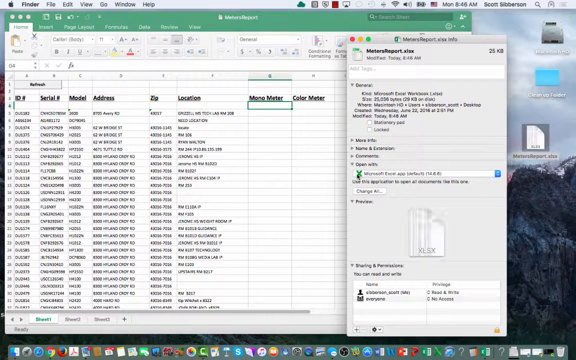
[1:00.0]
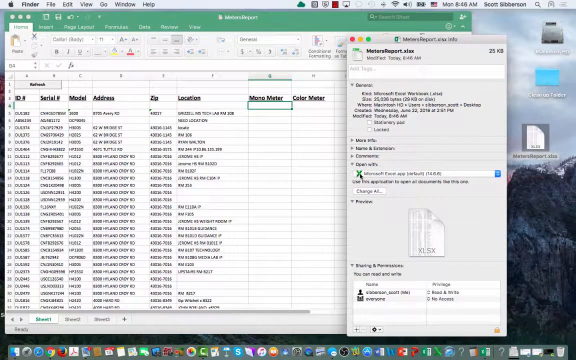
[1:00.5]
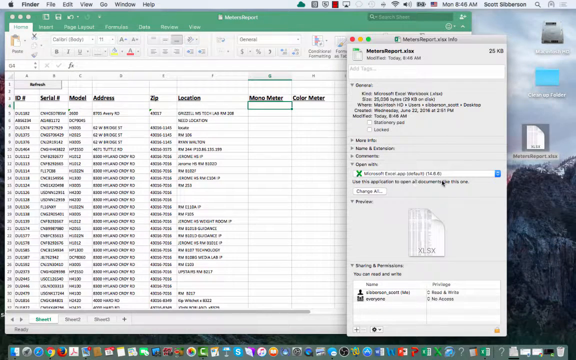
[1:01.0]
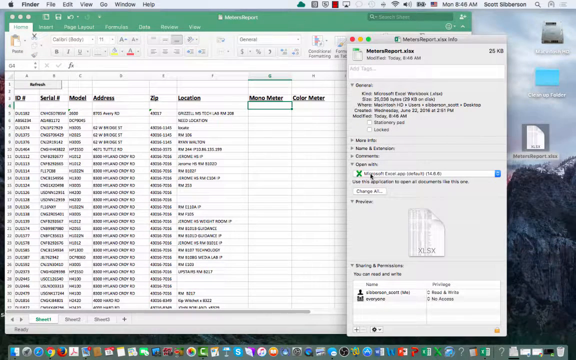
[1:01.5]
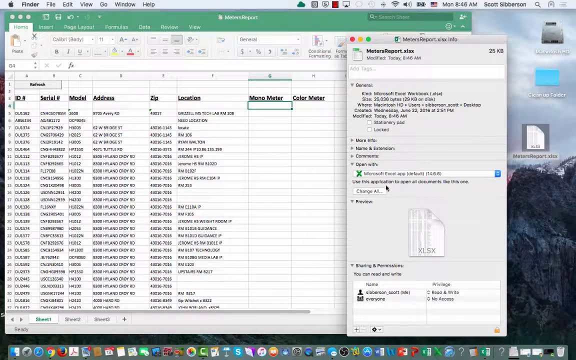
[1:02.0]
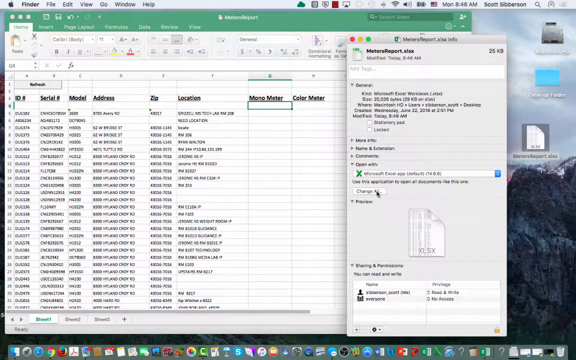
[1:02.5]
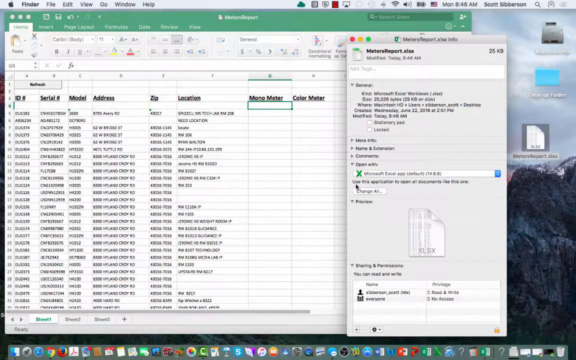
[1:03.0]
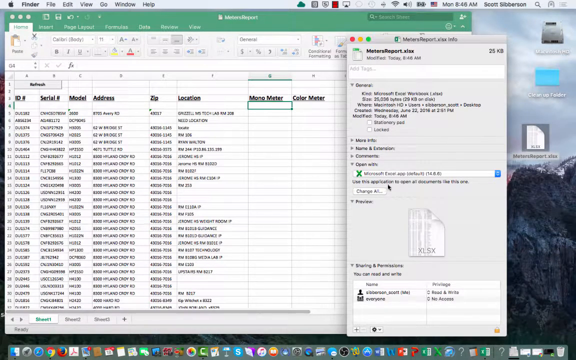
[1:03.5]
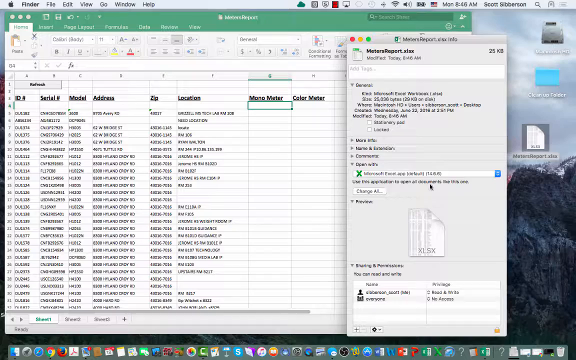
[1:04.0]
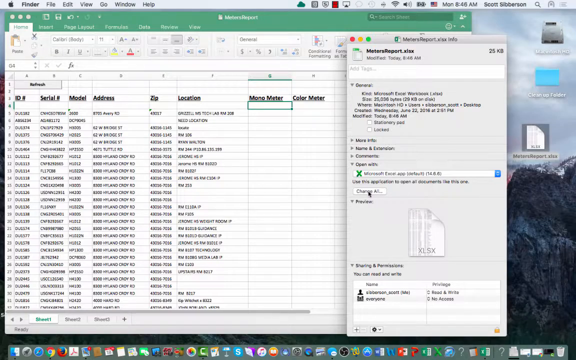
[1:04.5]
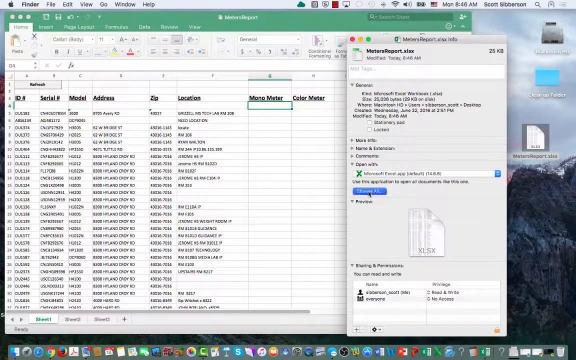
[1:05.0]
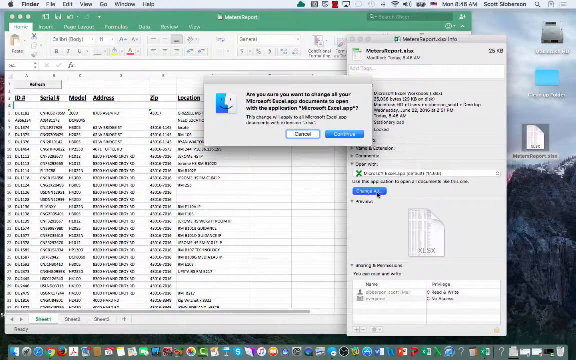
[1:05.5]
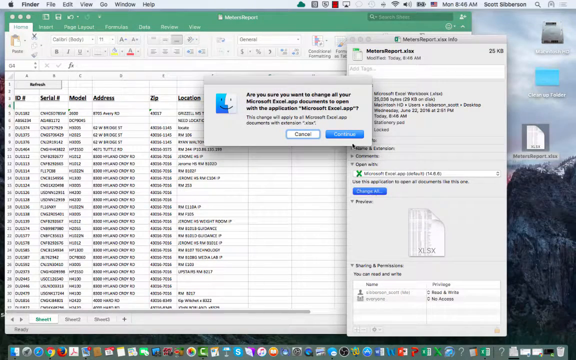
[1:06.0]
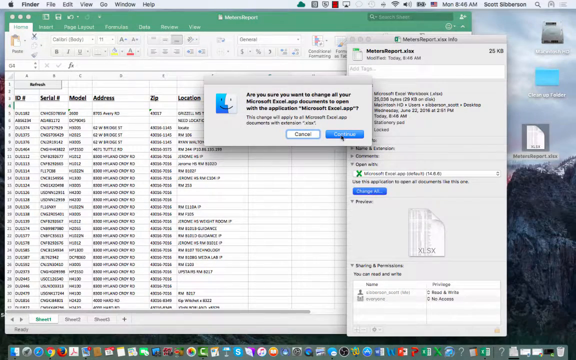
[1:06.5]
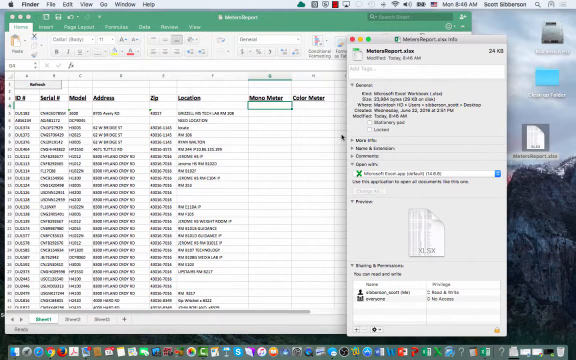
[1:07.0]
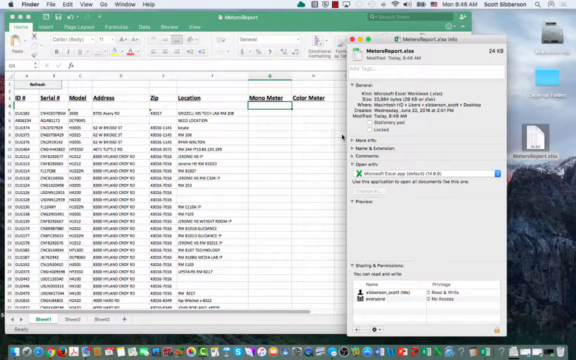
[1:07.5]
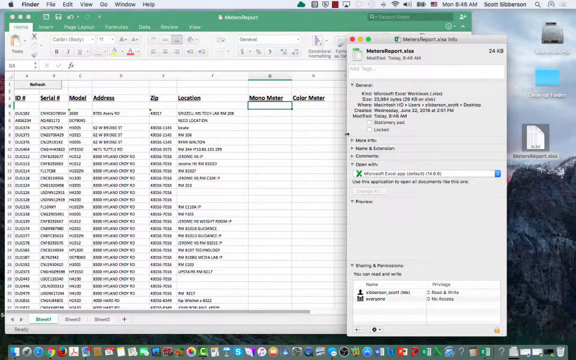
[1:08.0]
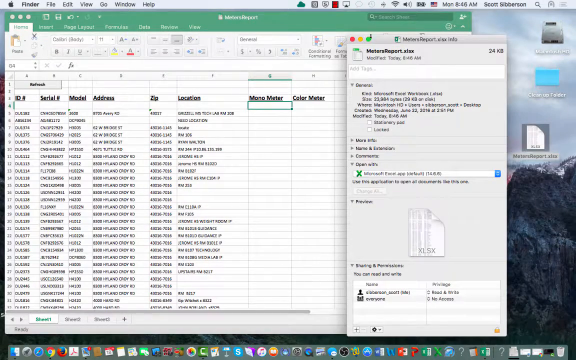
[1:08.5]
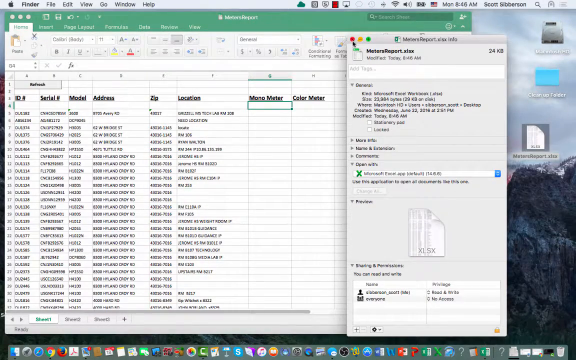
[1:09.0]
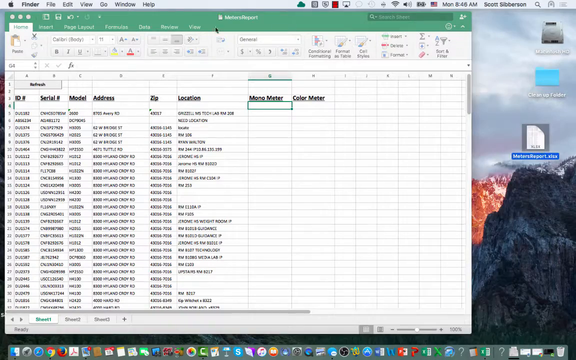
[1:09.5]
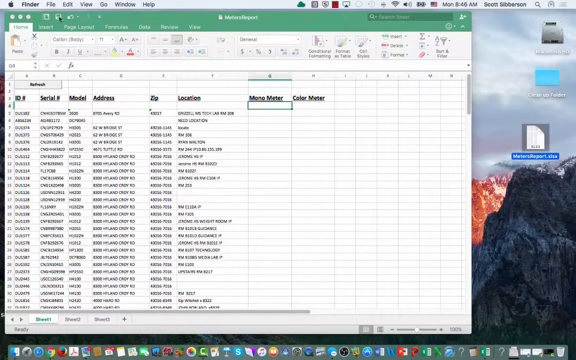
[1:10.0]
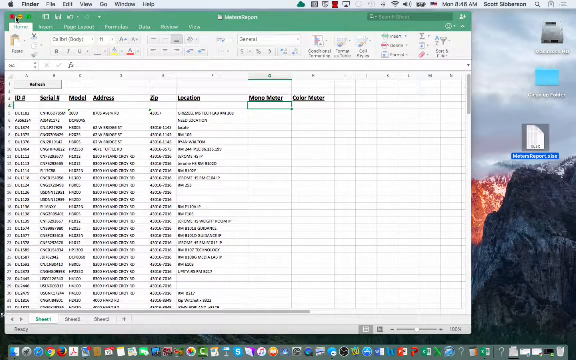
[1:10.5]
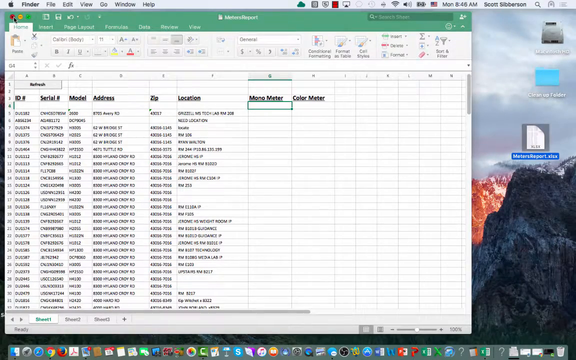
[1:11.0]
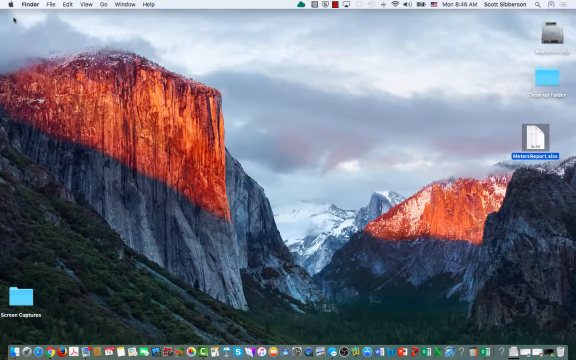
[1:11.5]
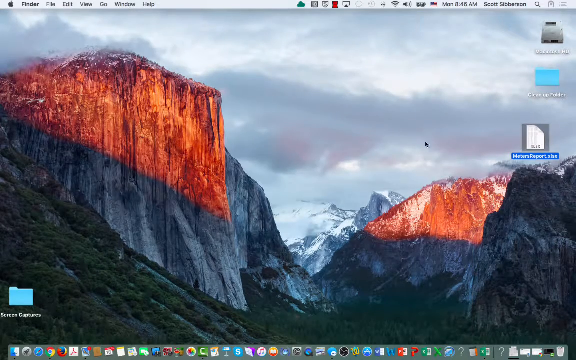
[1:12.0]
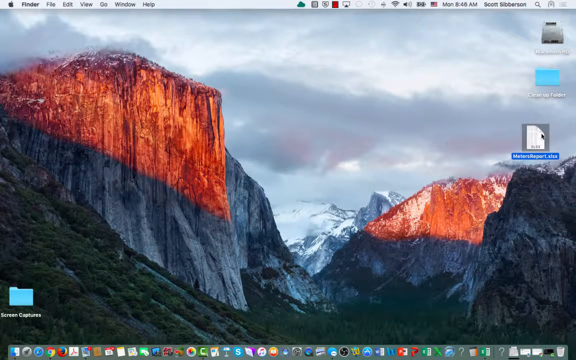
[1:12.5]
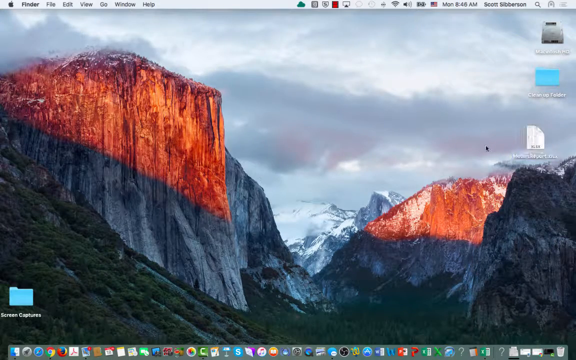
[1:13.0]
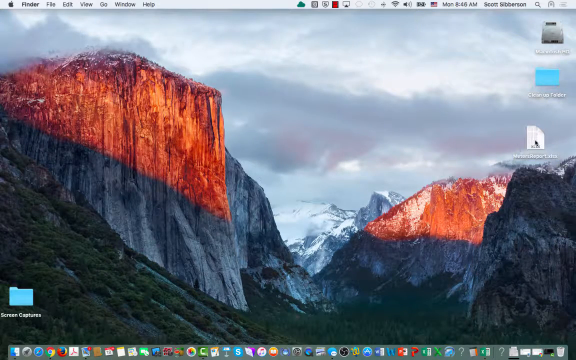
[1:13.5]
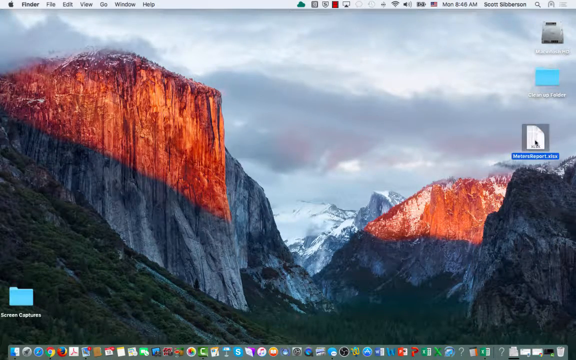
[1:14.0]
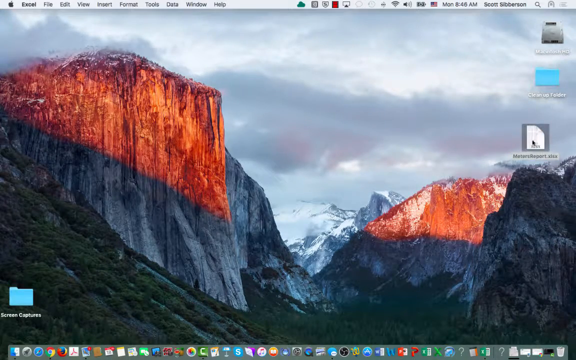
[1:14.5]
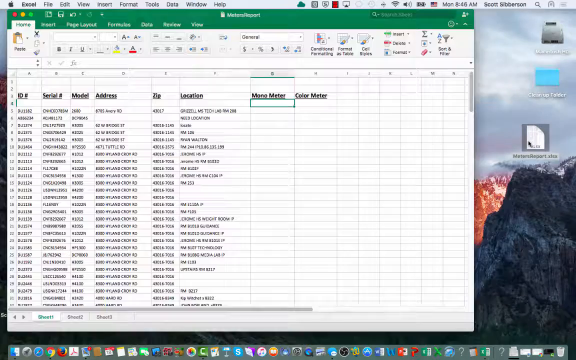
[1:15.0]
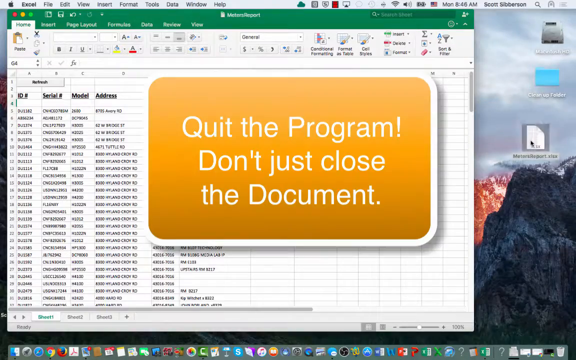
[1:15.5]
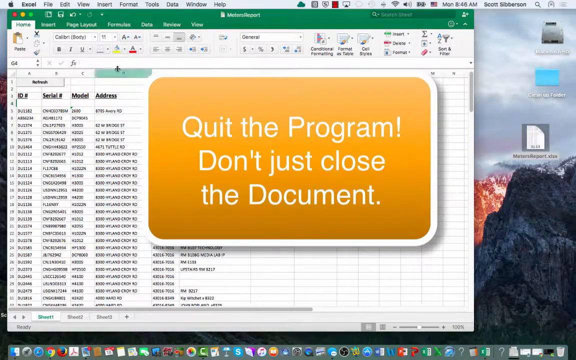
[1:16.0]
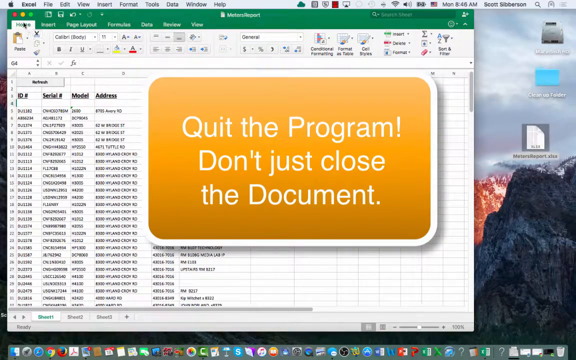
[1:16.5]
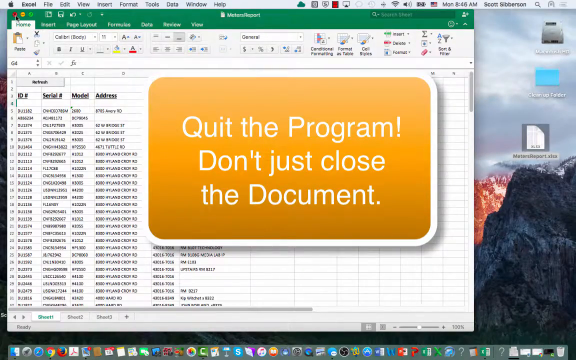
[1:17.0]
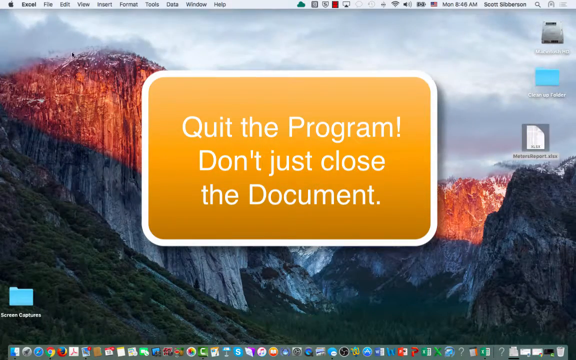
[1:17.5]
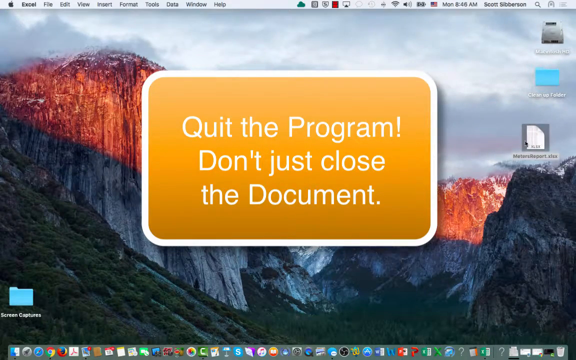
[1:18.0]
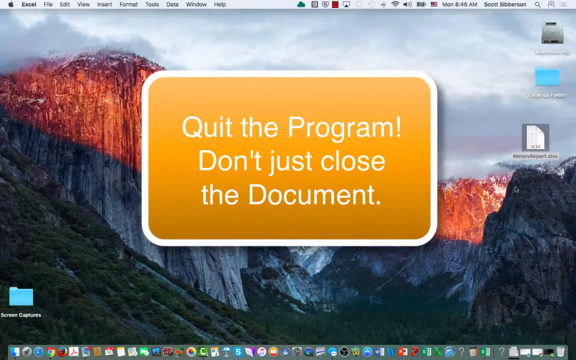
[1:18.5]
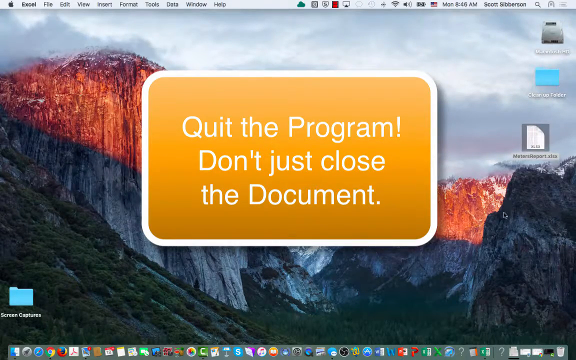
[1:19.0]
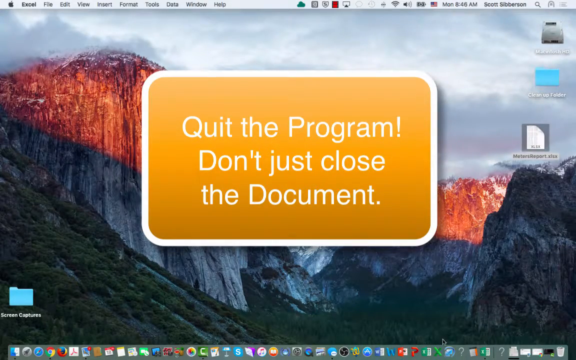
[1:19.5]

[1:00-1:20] Below that is the sentence "use this application to open all documents like this one", and right below it a "change all" button, which the person clicks. A pop-up asks "are you sure you want to change all your Microsoft Excel app documents to open with the application Microsoft Excel app", and the person clicks "continue". They then press the red exit button at the top of the pop-up, and then the red exit button on the meter's report spreadsheet. More of the desktop becomes visible: its background is a picture of snow-covered mountain ranges with sun shining on some of them, and the only other visible icon is "screen captures". The person clicks on the meters report again, it pops up, and a large yellow and white caption appears reading "quit the program. Don't just close the document."